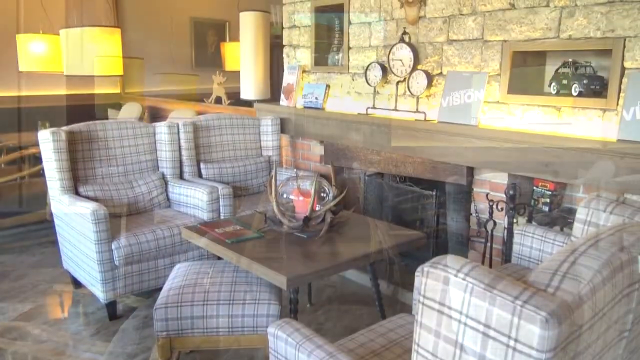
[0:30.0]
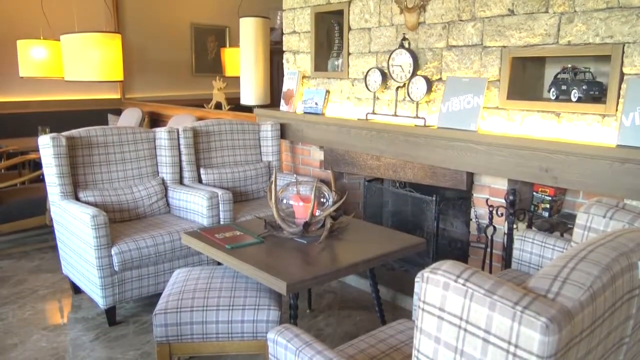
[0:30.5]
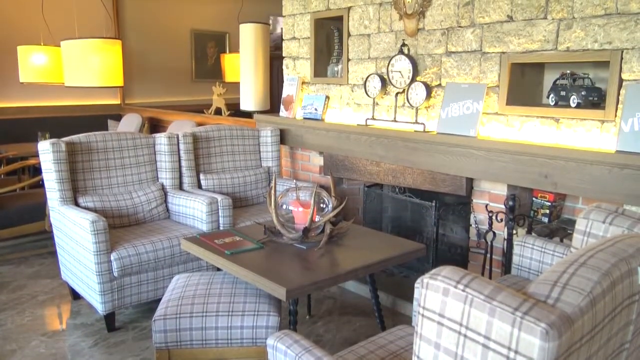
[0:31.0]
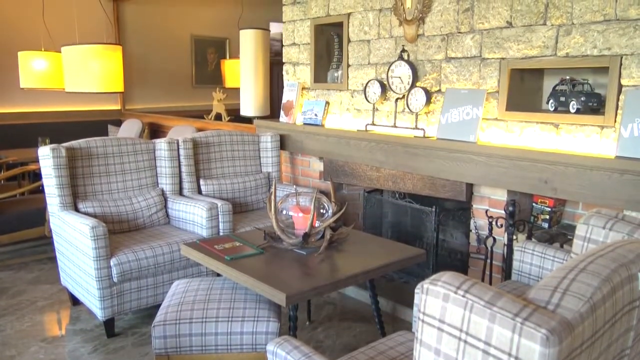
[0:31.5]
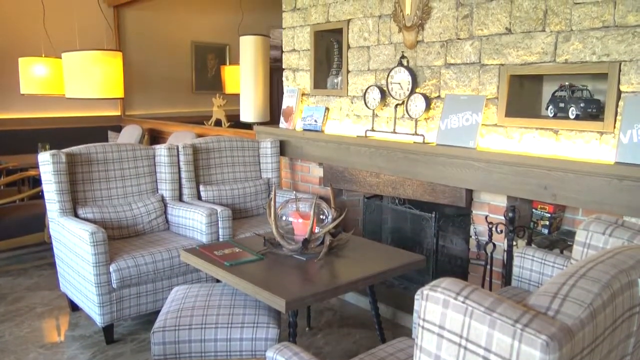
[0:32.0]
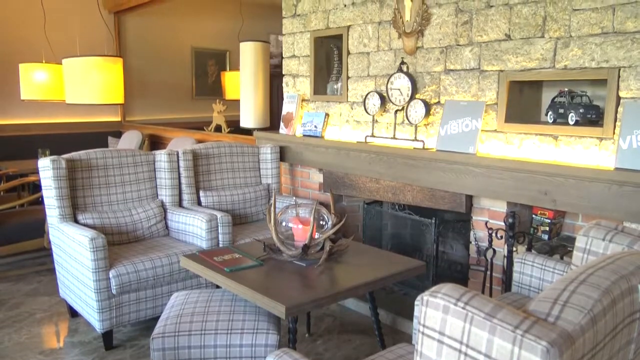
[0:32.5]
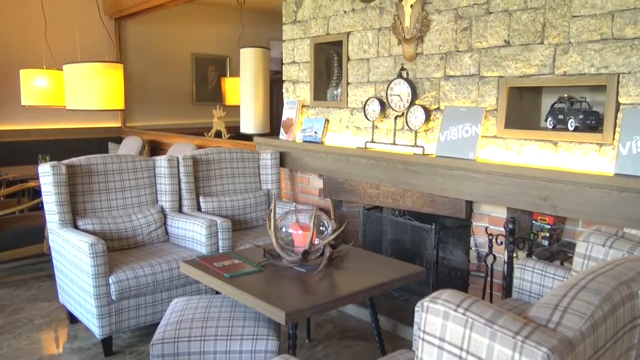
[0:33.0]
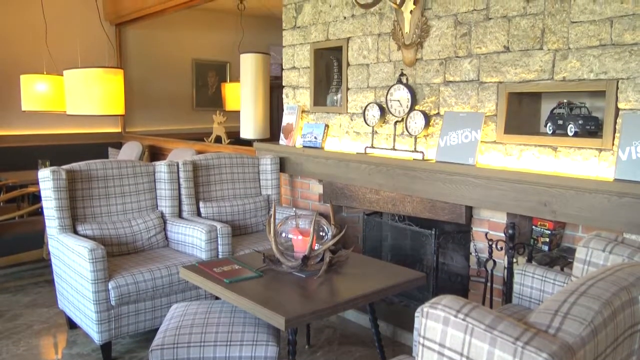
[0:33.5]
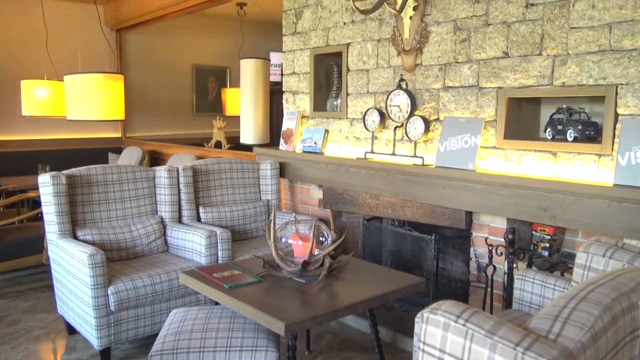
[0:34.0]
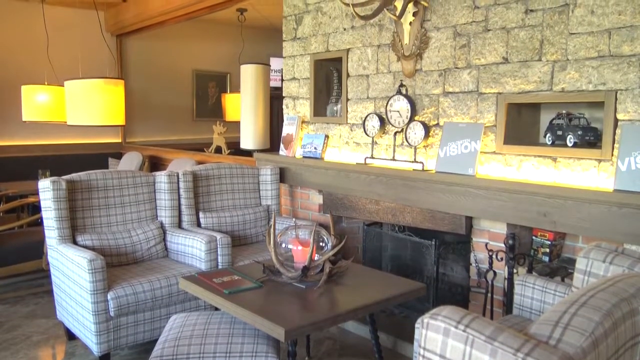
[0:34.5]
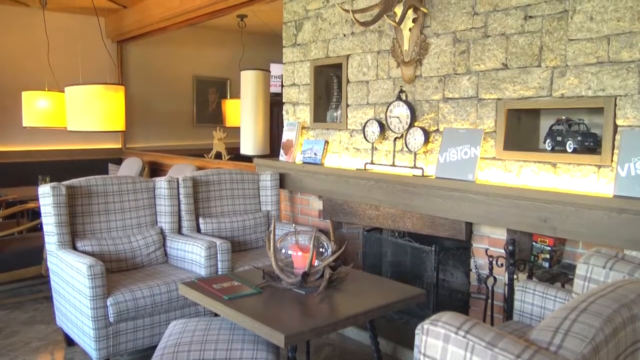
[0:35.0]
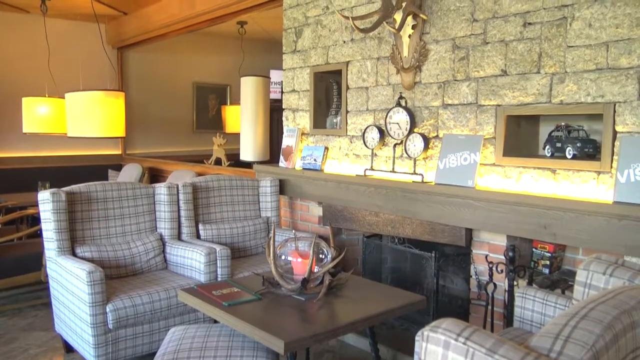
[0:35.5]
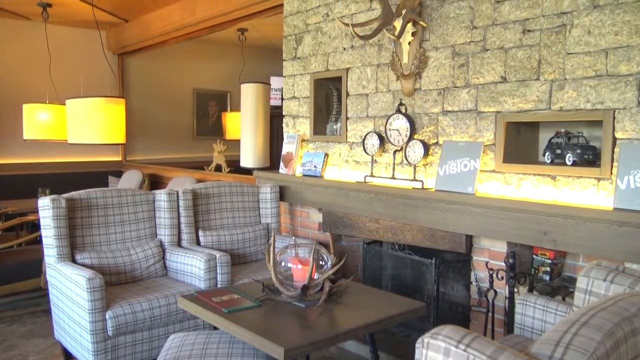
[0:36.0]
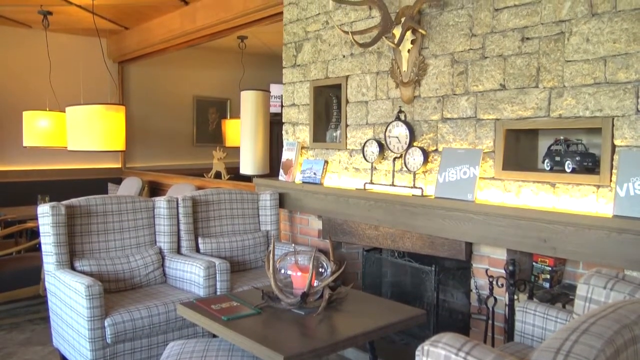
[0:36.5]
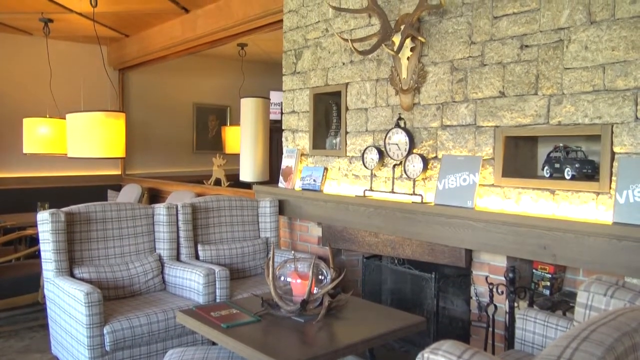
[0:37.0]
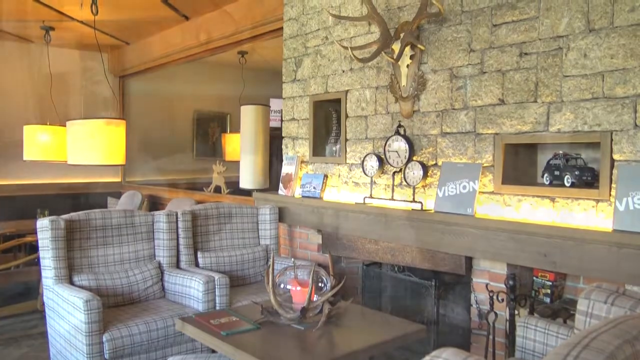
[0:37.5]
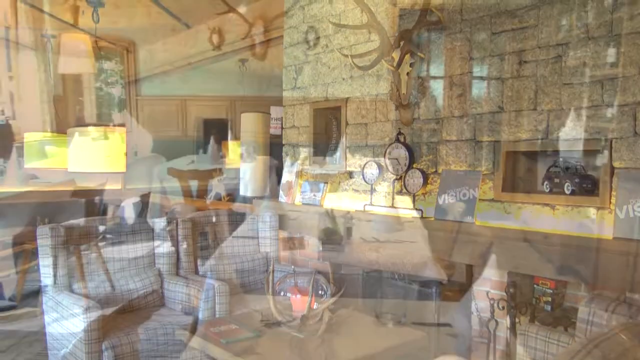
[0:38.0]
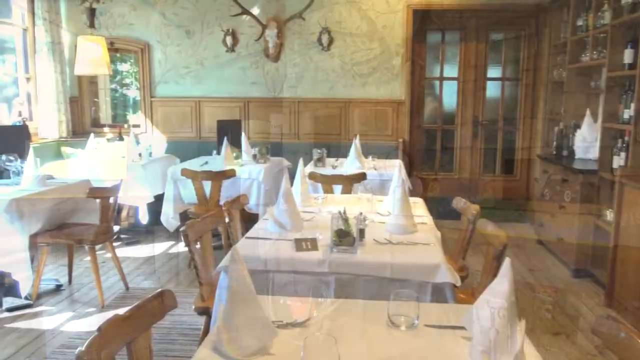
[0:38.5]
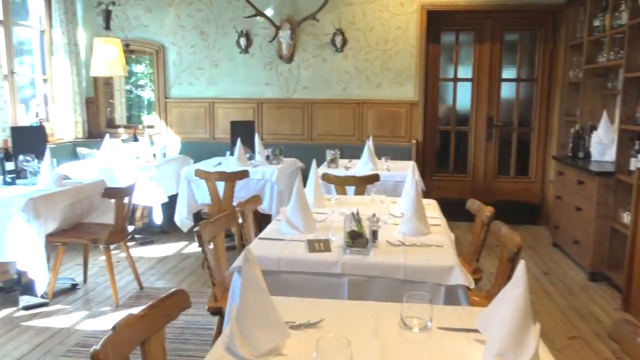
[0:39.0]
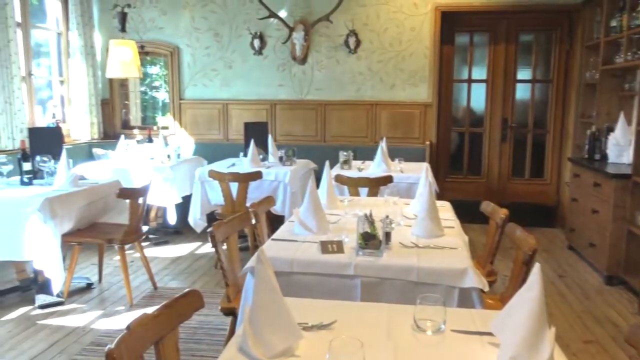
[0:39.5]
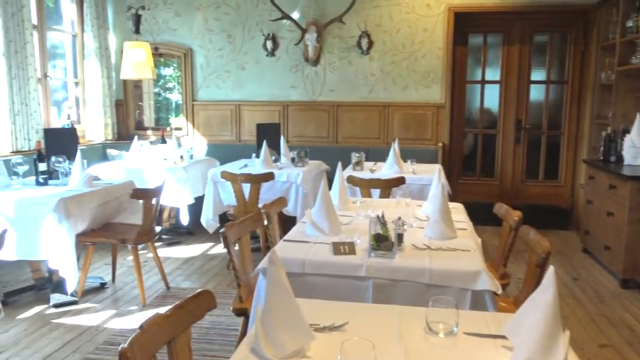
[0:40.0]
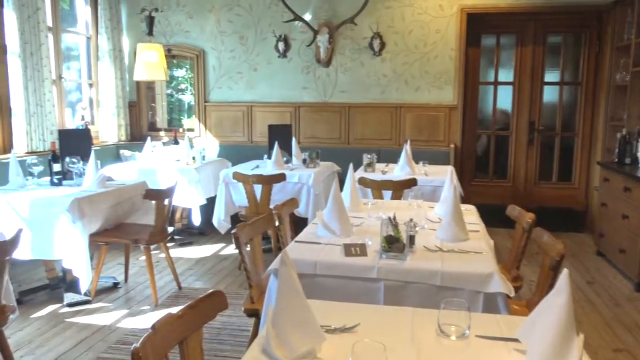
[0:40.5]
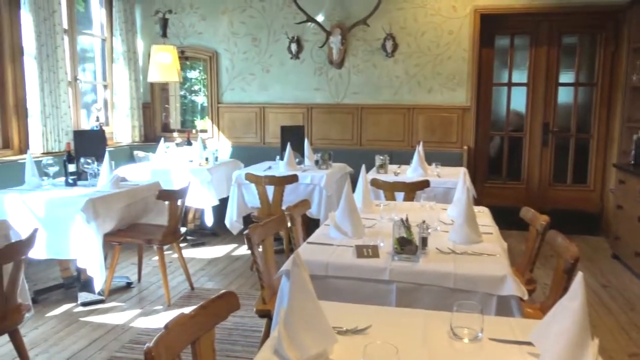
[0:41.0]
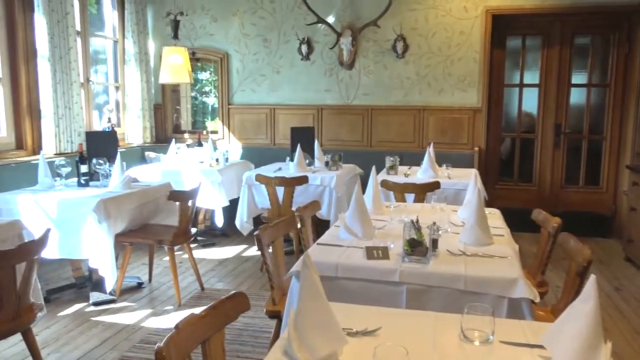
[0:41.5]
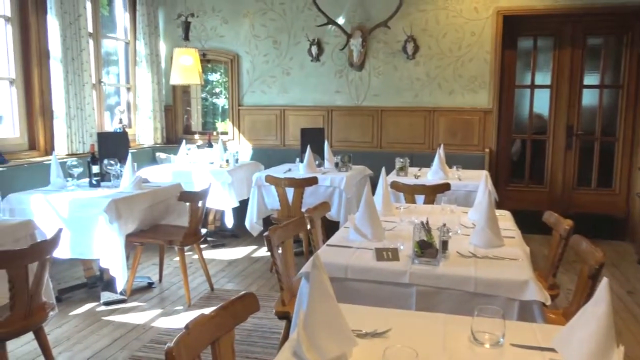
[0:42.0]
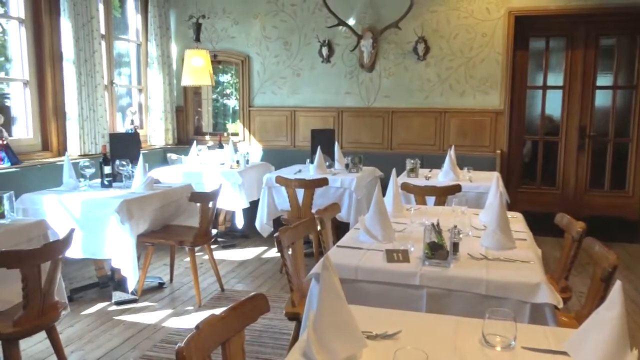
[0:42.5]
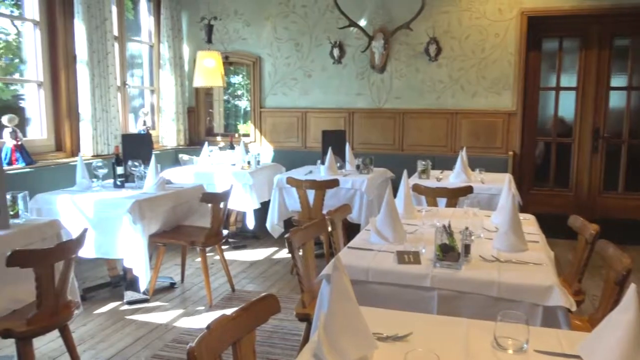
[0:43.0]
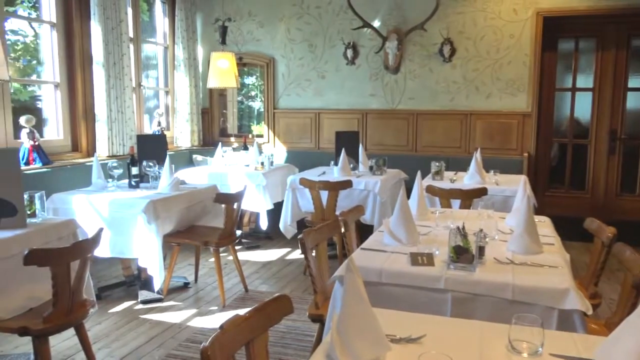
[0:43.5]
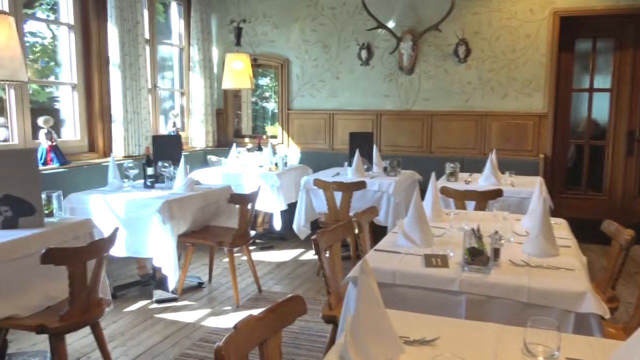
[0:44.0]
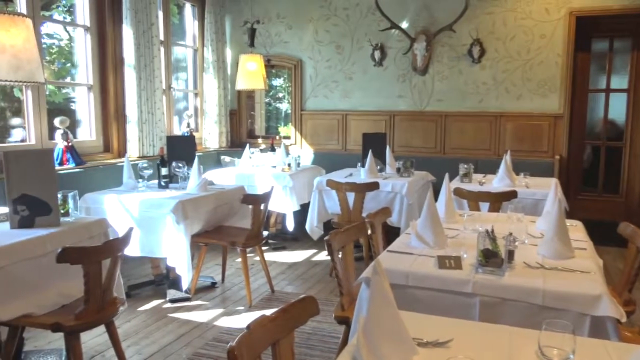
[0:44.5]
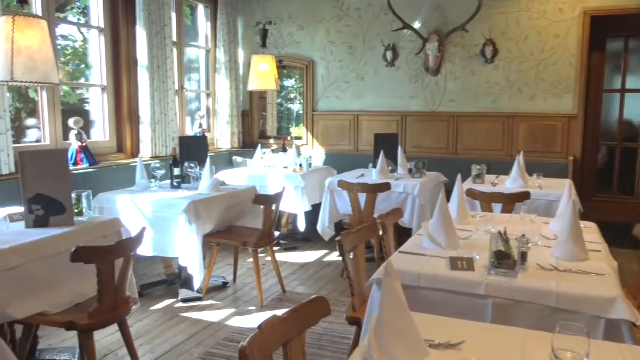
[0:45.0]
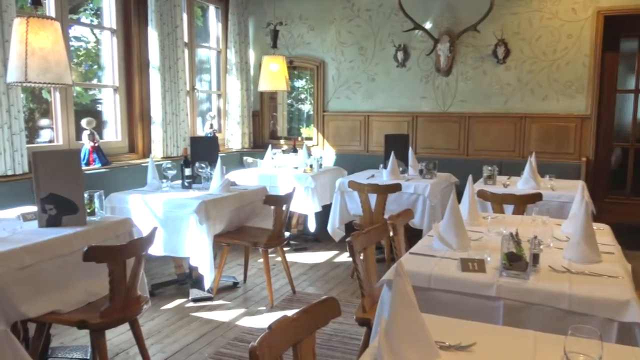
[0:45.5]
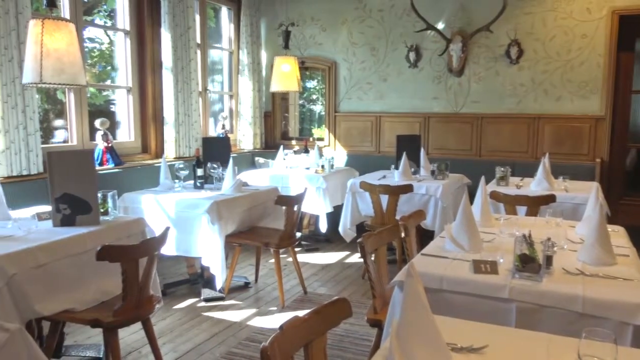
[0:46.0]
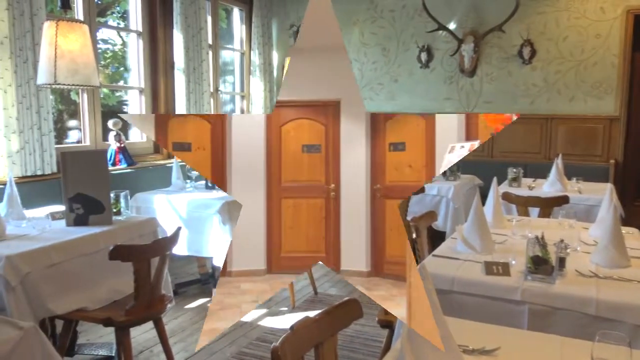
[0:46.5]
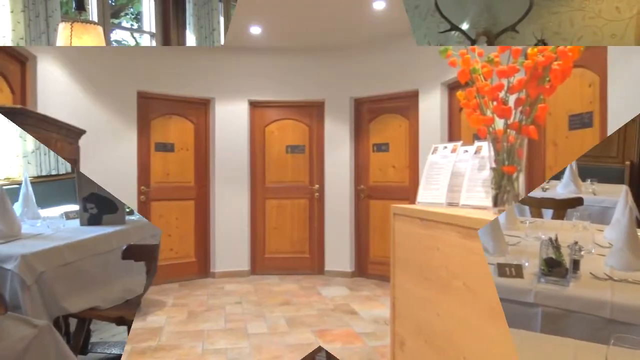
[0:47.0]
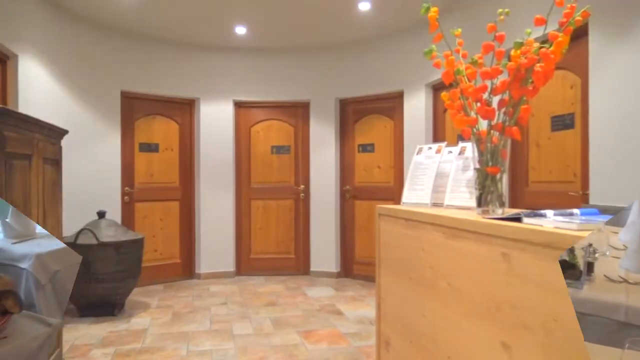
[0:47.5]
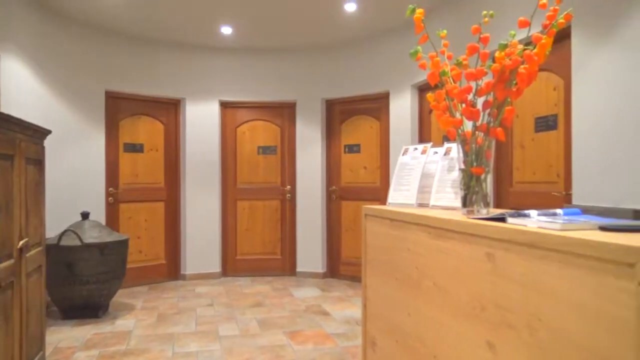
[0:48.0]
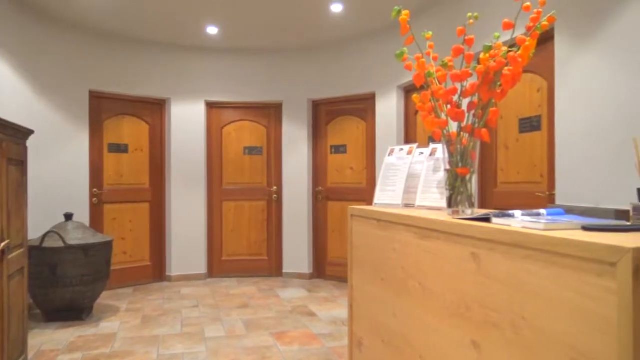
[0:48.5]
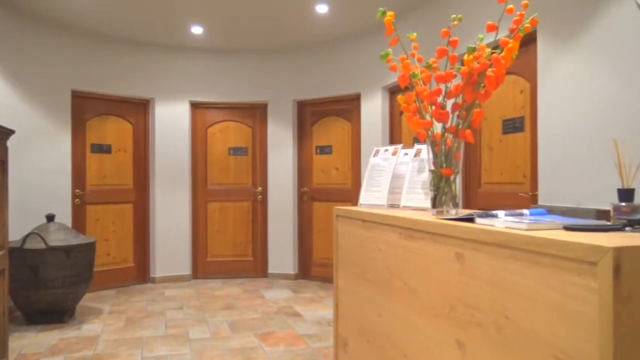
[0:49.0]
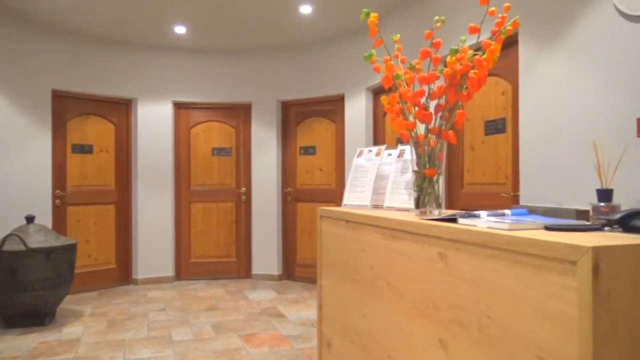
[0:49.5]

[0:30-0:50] What appears to be the foyer or interior of a hotel opens with four chairs around a table next to a fireplace. The fireplace is surrounded by large yellow limestone blocks and has several different artworks, including a vintage model car recessed into it, as well as several different types of clocks. Lamps are visible in the background hanging from the ceiling, and there is a decorative antler above the fireplace mantle. The video then transitions to a kitchen with five square tables with four chairs around them, though some of the tables only have two chairs. The walls have wallpaper and wood siding, and several decorative skulls are along the wall: one large and two smaller. The tables have napkins and pencils, and one table has a wine bottle and wine glasses on it. There is a doll on a window sill behind the table. The video then transitions to a hotel room location showing five doors.